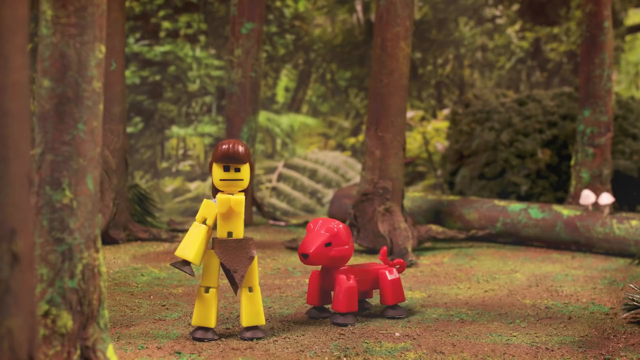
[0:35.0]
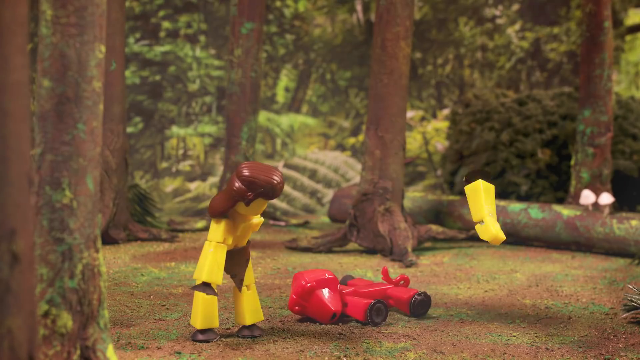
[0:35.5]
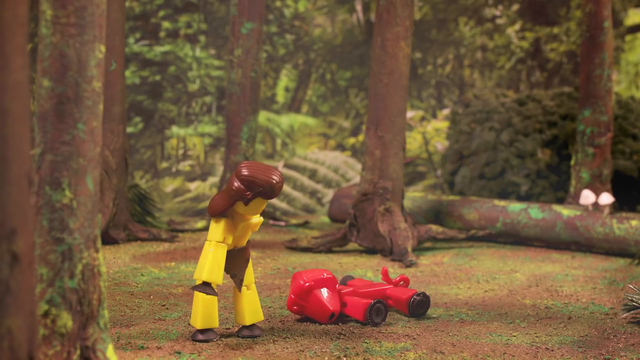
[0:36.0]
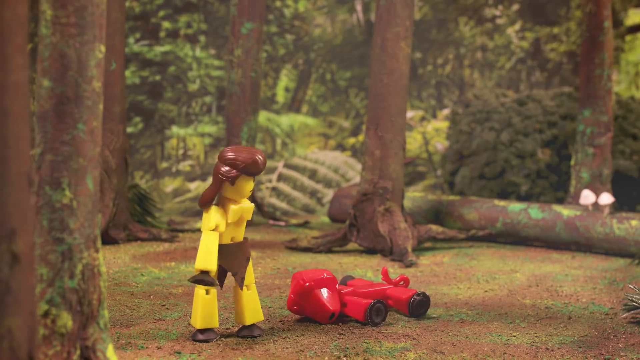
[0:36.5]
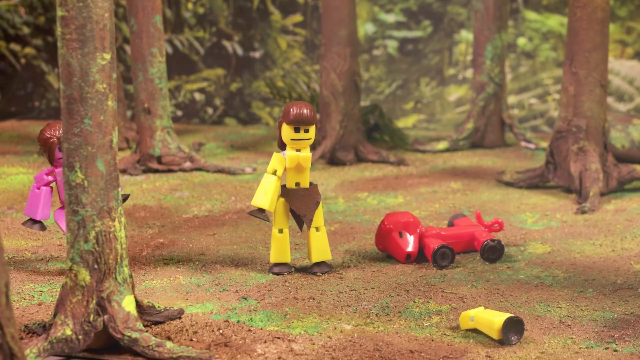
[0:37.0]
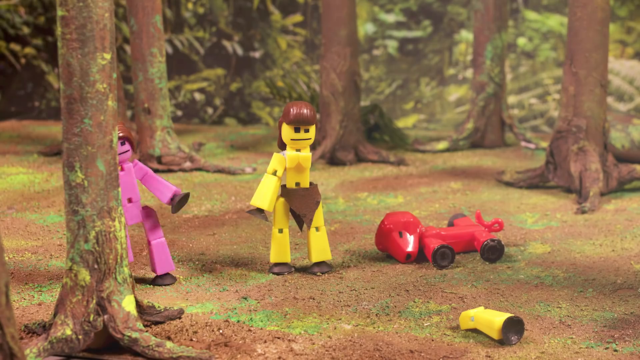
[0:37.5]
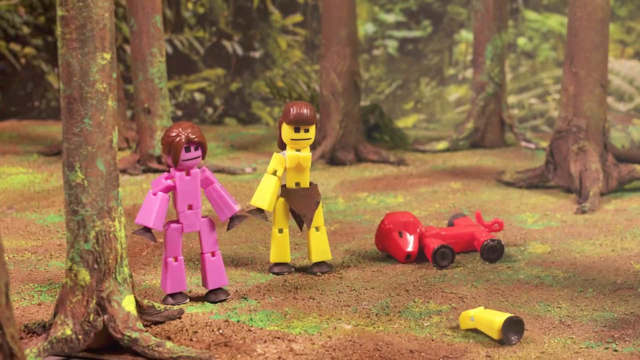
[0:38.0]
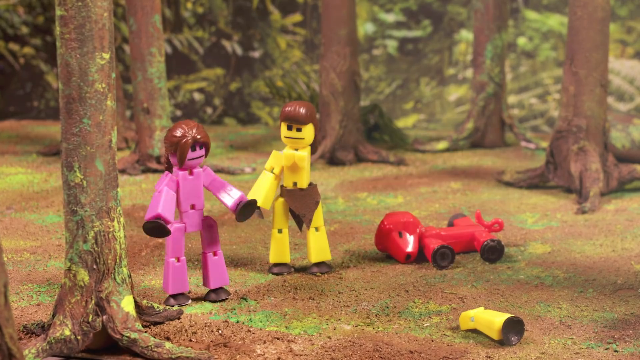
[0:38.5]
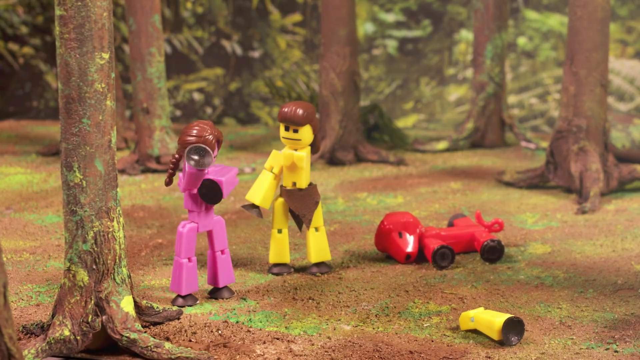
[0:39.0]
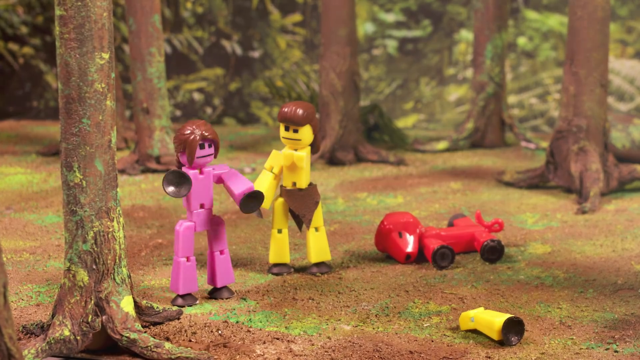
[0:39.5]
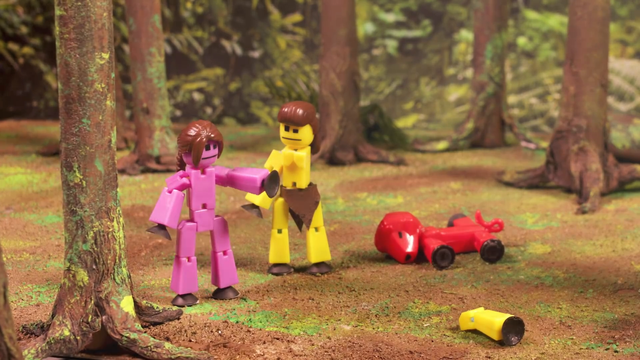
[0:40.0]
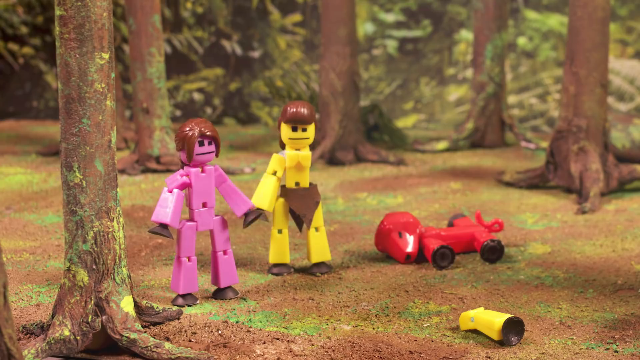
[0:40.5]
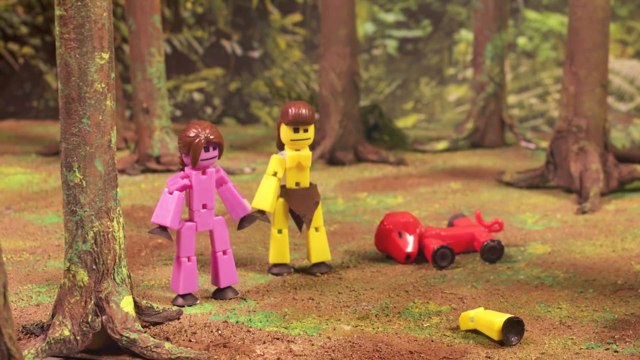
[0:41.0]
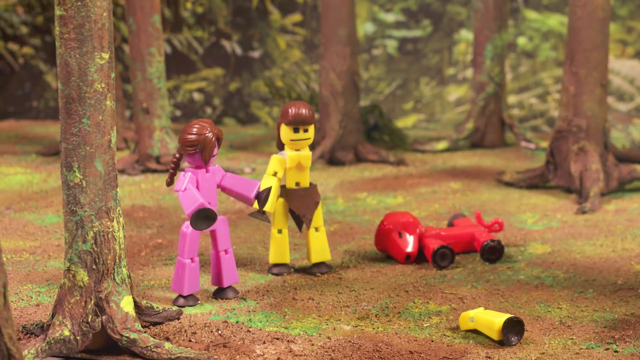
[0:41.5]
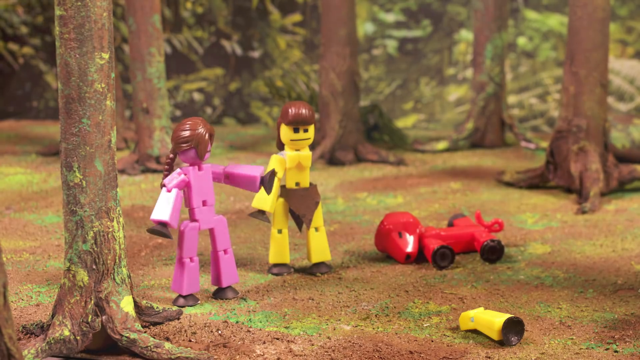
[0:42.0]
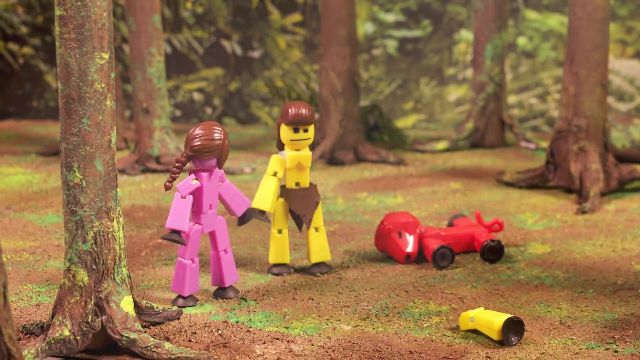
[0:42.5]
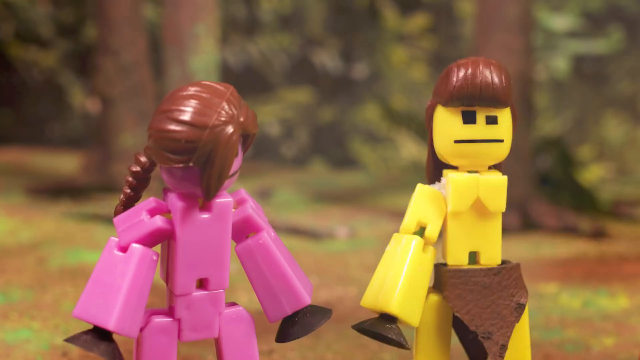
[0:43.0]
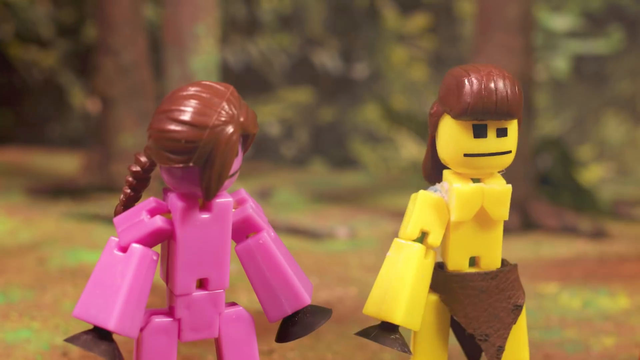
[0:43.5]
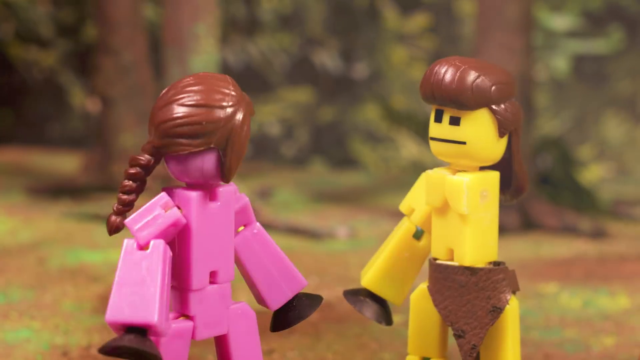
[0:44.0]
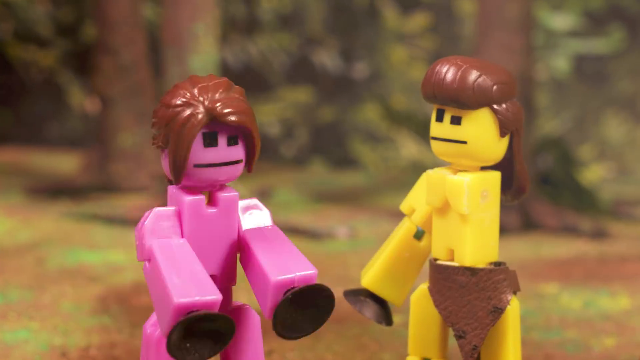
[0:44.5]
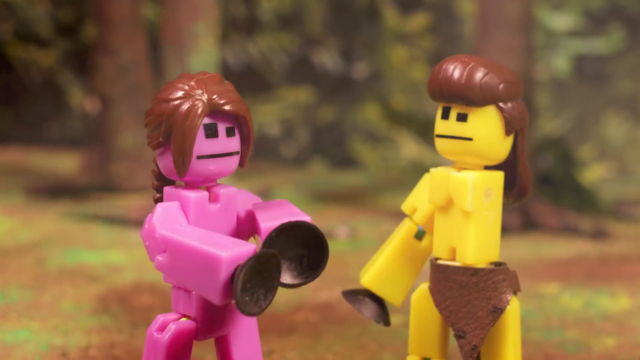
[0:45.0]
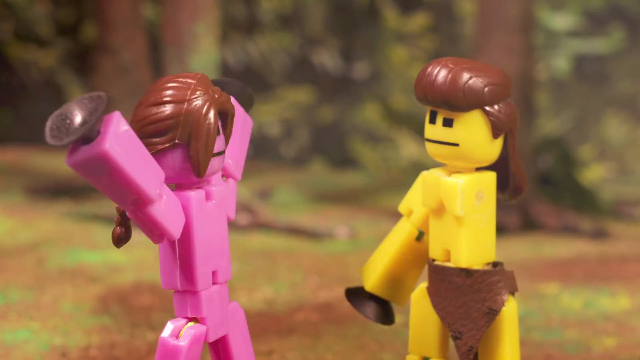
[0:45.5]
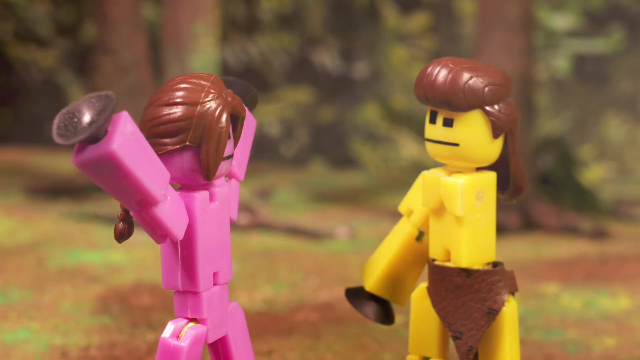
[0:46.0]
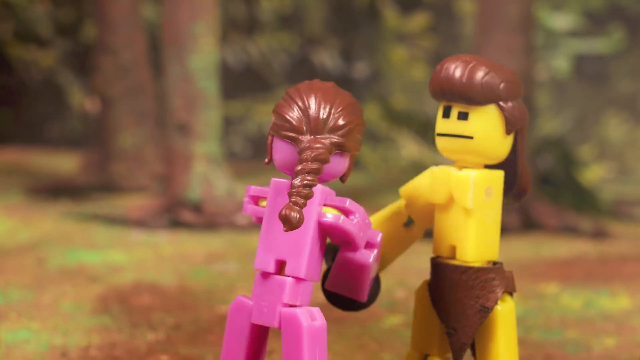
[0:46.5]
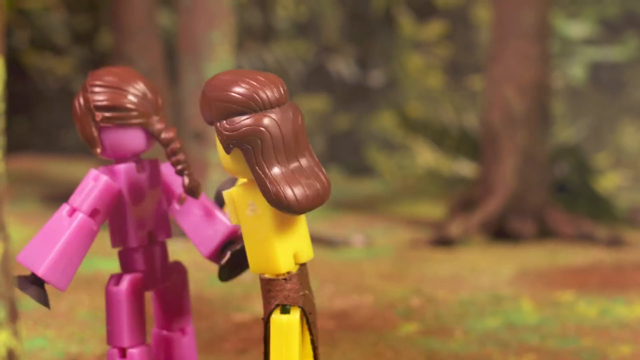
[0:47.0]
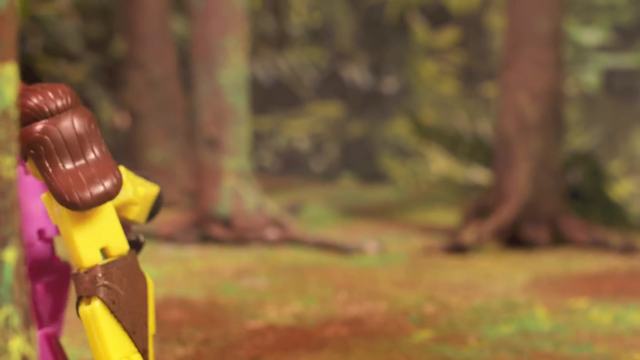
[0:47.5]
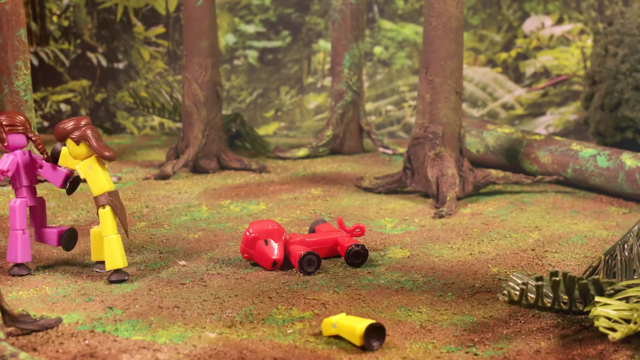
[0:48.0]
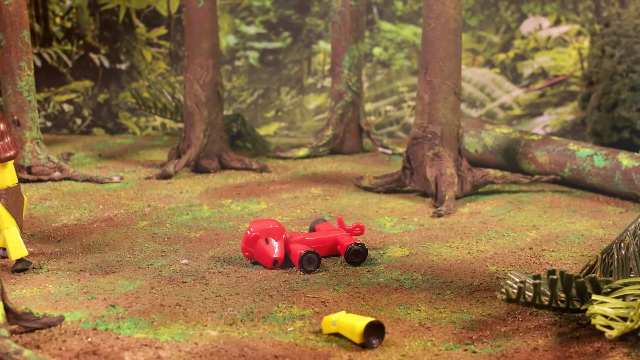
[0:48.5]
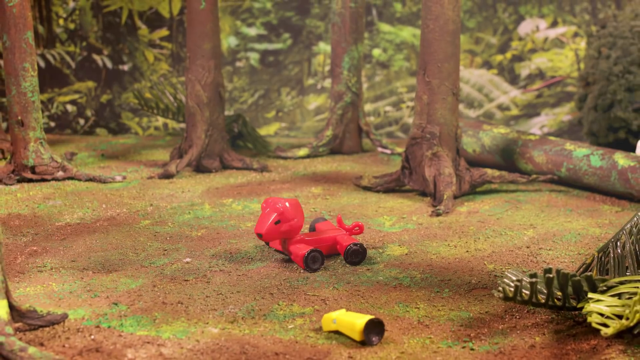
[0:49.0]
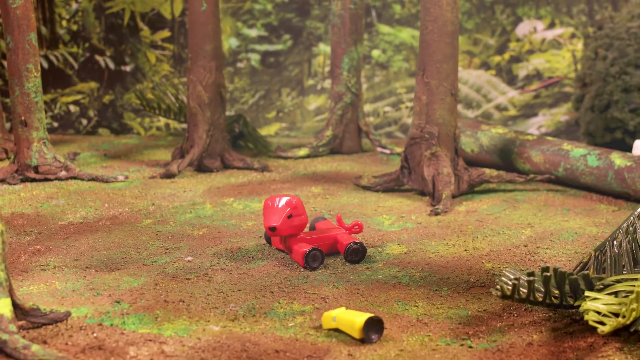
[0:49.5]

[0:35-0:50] On the forest ground, a yellow humanoid figurine stands, missing its left arm. It has brown hair and wears a brown loincloth around its hips. To its right is a red dog/wolf-like creature with a curled tail. Suddenly, the person's limb falls from the sky and hits the creature in the head, causing it to pass out with its limbs all splayed out on the ground. The person looks down at the creature, and then another humanoid figurine approaches; it is pink with long brown hair and a ponytail. The pink figurine starts gesturing around, looking at the creature and at the yellow figurine. The yellow figurine looks back, and they seem to be talking. Suddenly, the pink figurine grabs hold of the yellow figurine and leads him away. The creature then lifts its head up and looks at the camera.